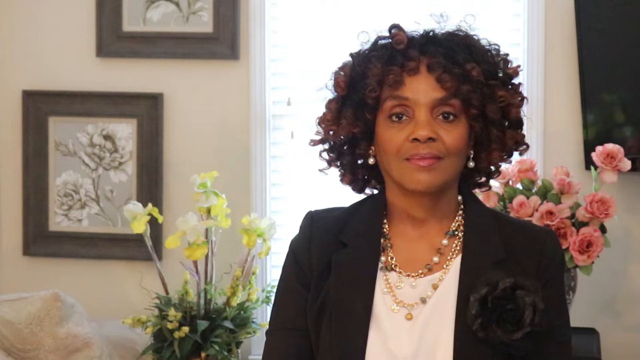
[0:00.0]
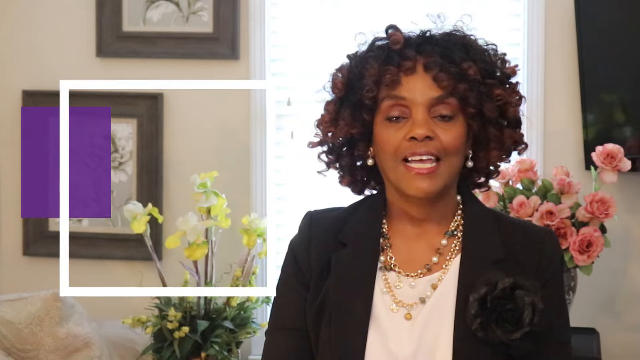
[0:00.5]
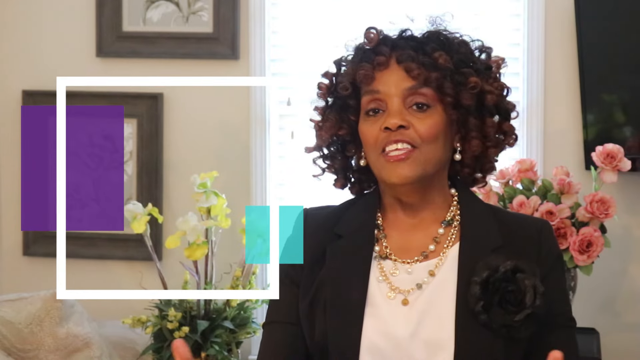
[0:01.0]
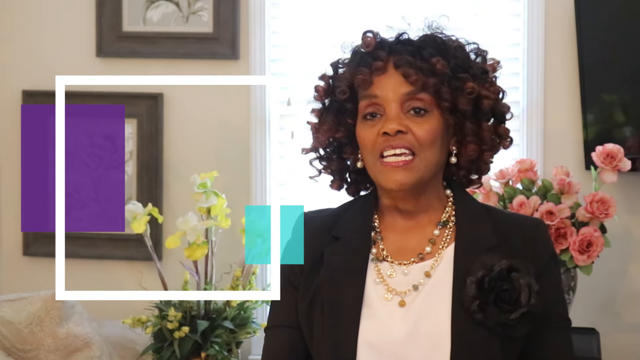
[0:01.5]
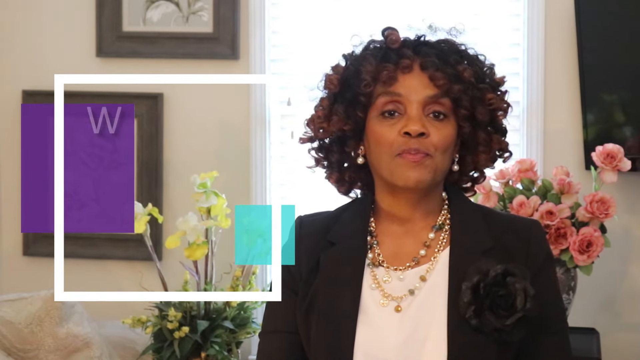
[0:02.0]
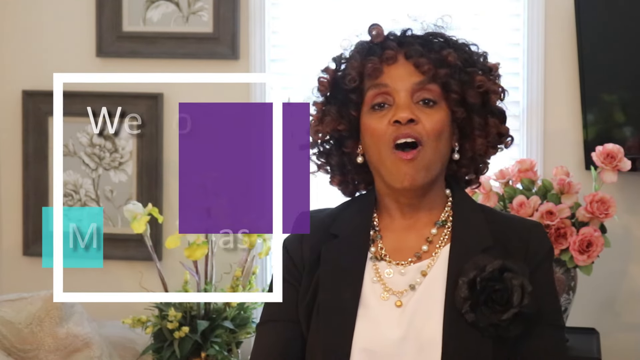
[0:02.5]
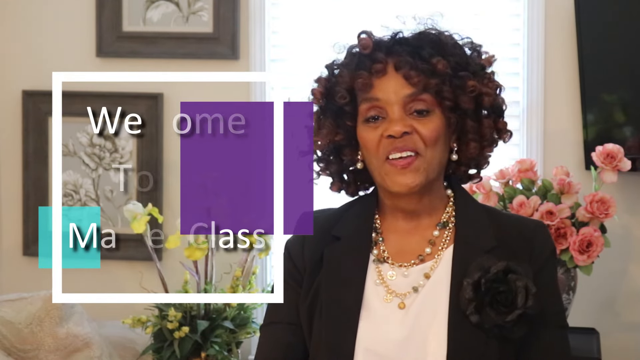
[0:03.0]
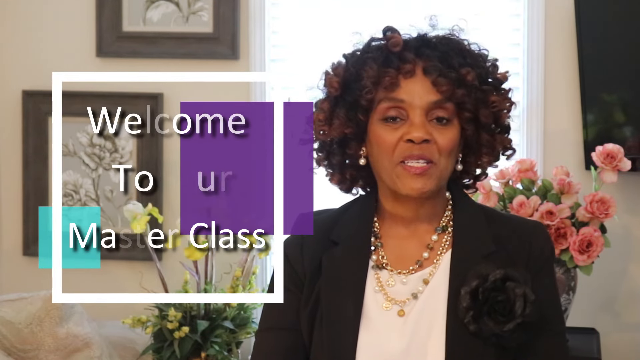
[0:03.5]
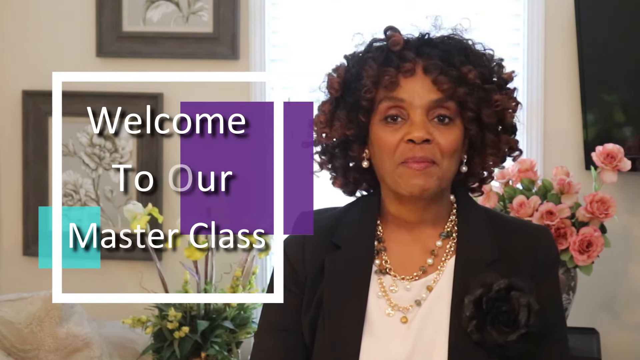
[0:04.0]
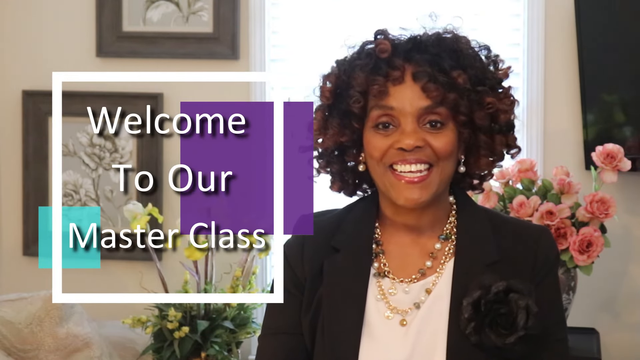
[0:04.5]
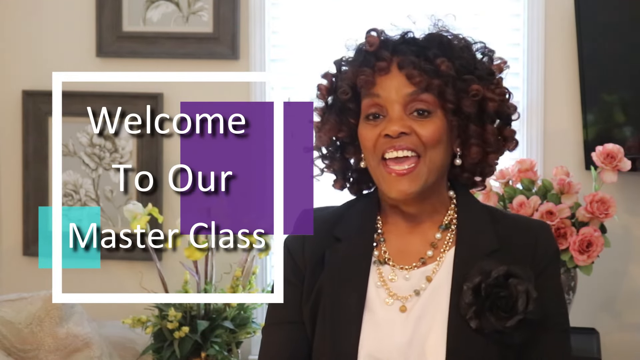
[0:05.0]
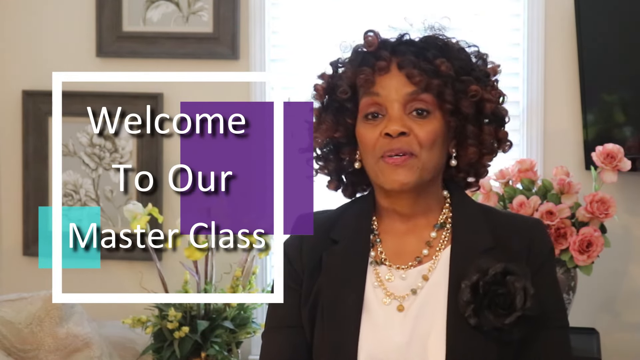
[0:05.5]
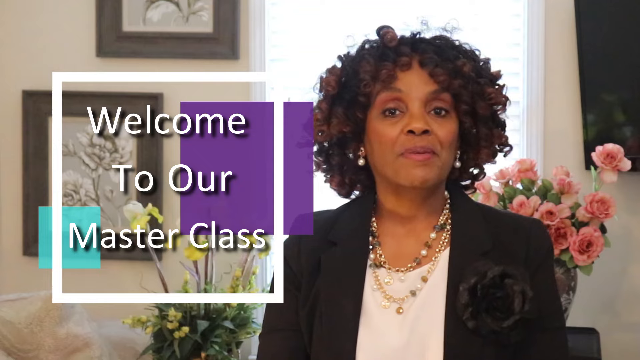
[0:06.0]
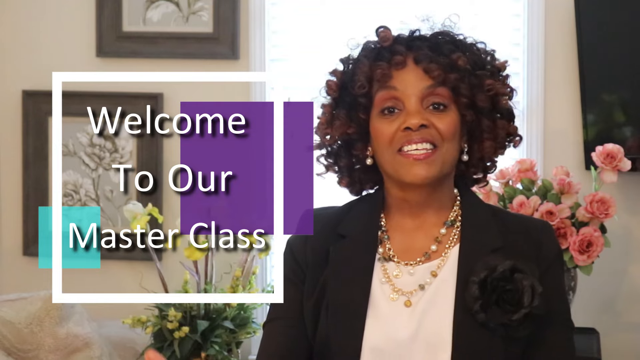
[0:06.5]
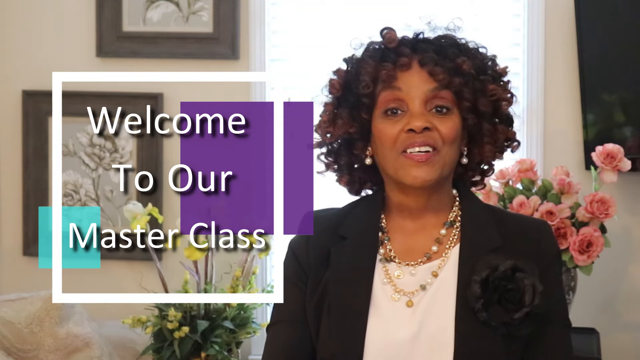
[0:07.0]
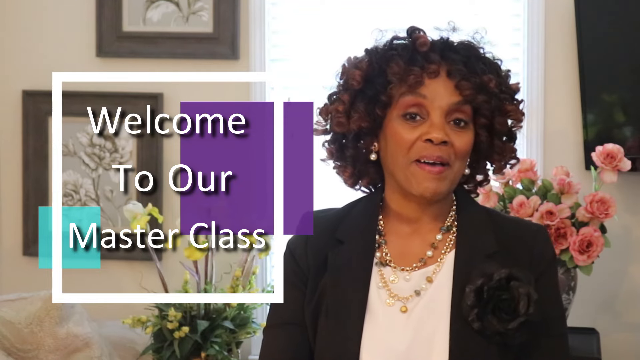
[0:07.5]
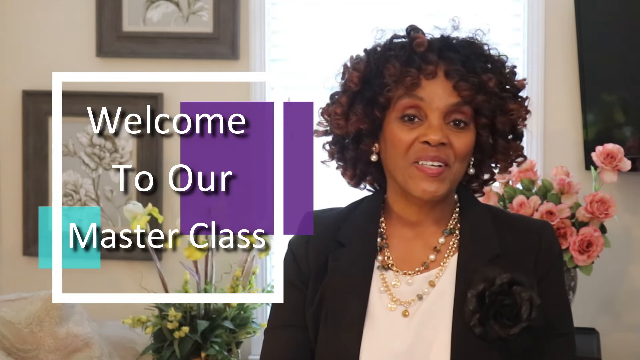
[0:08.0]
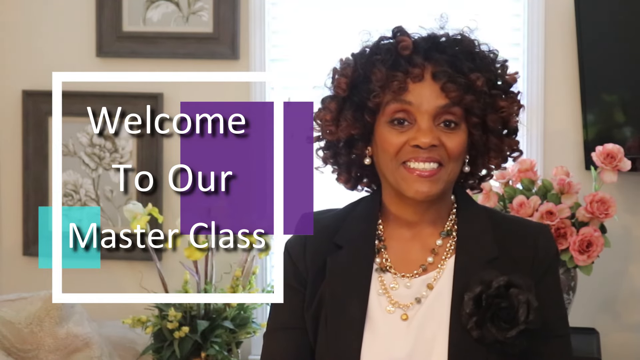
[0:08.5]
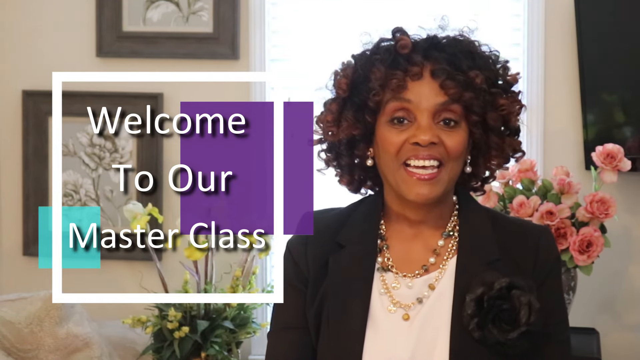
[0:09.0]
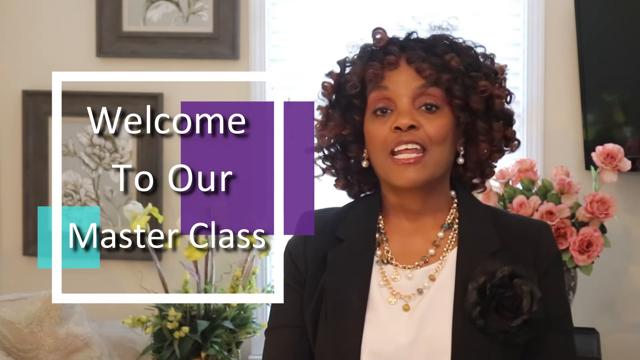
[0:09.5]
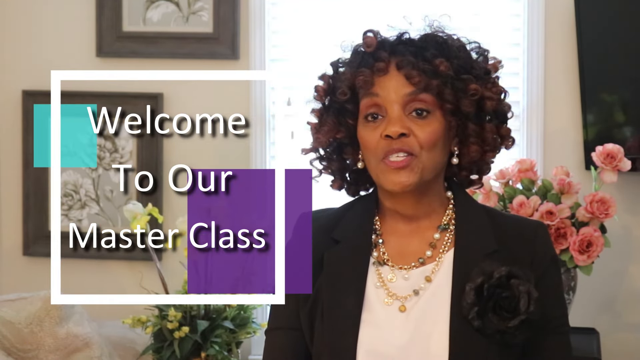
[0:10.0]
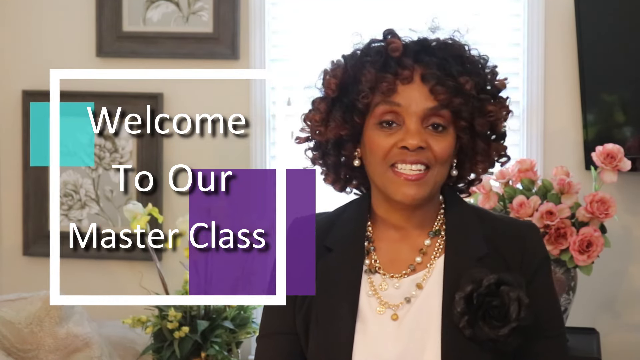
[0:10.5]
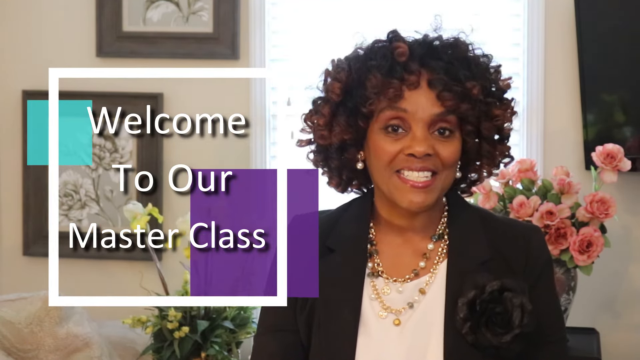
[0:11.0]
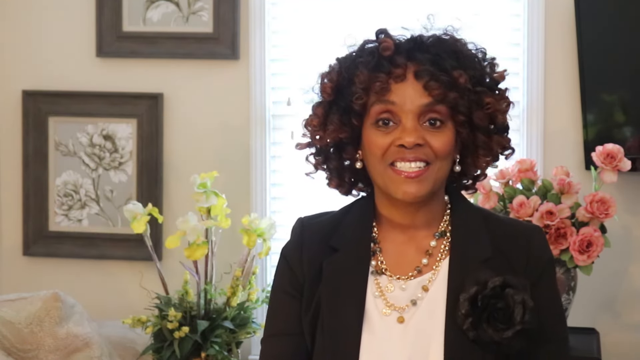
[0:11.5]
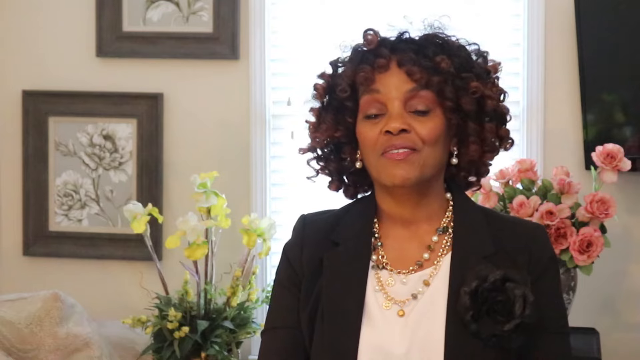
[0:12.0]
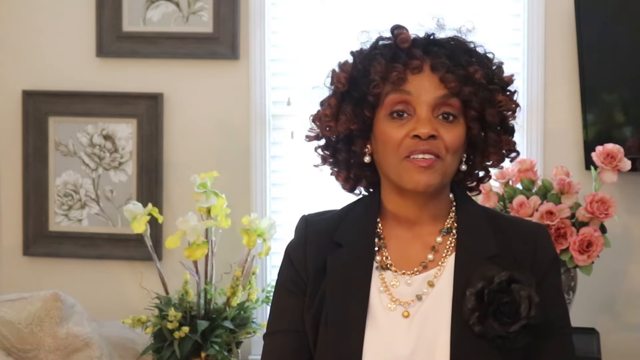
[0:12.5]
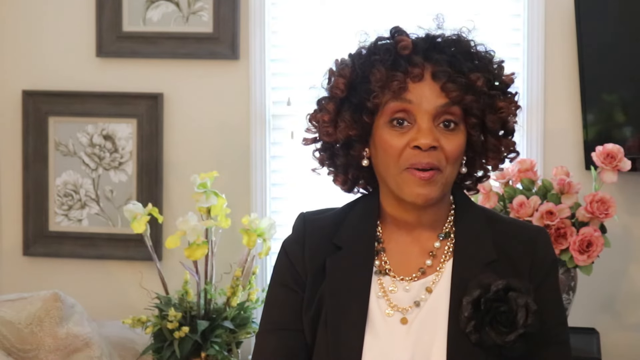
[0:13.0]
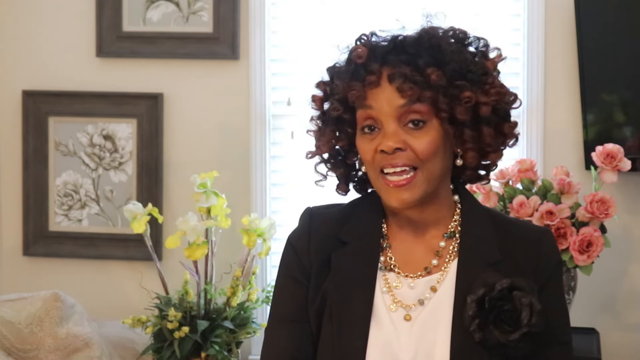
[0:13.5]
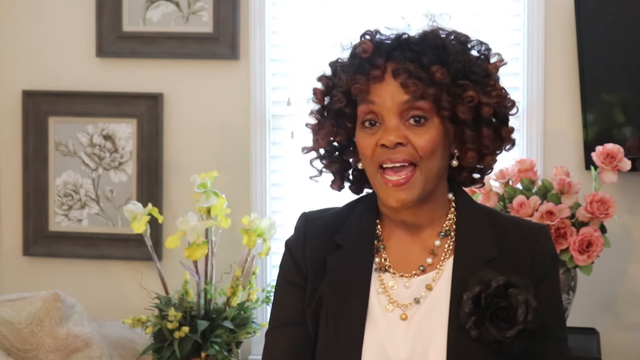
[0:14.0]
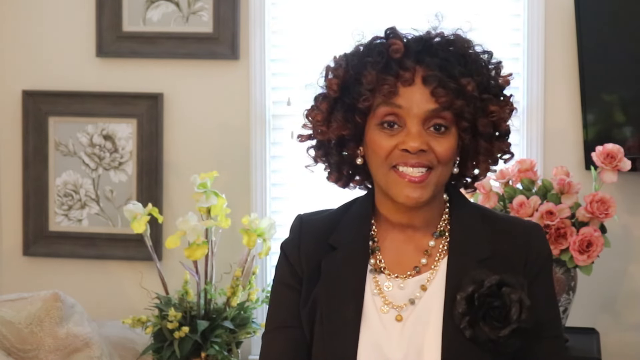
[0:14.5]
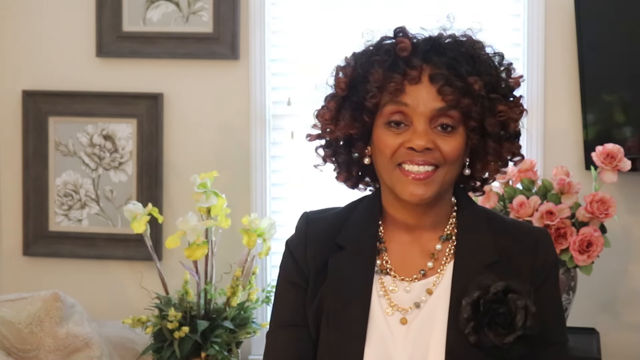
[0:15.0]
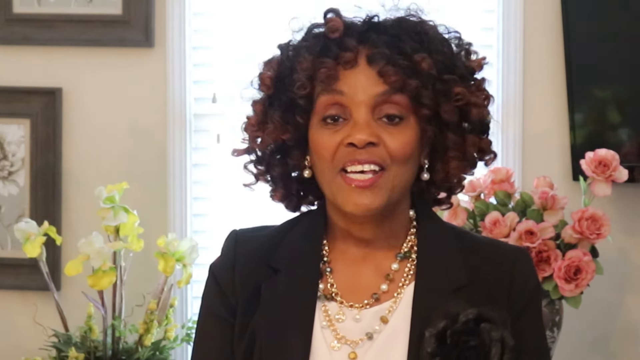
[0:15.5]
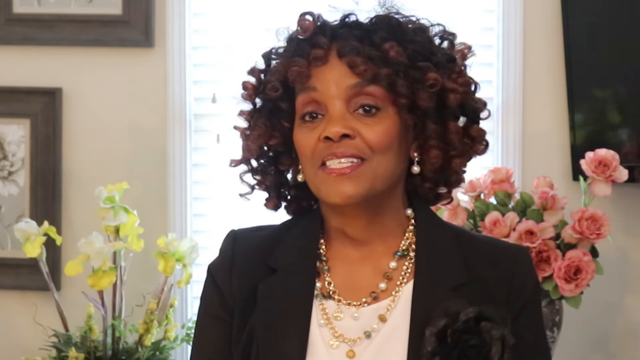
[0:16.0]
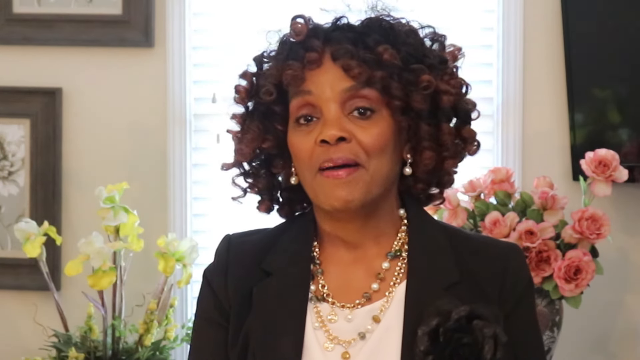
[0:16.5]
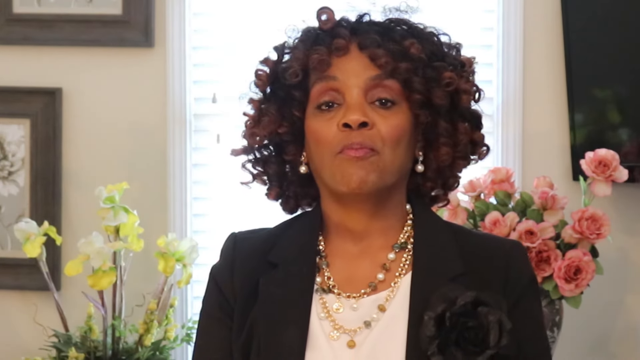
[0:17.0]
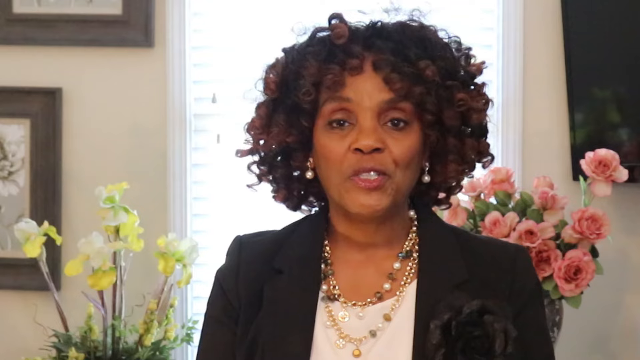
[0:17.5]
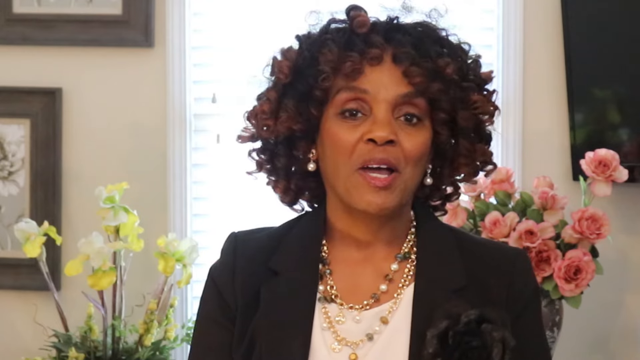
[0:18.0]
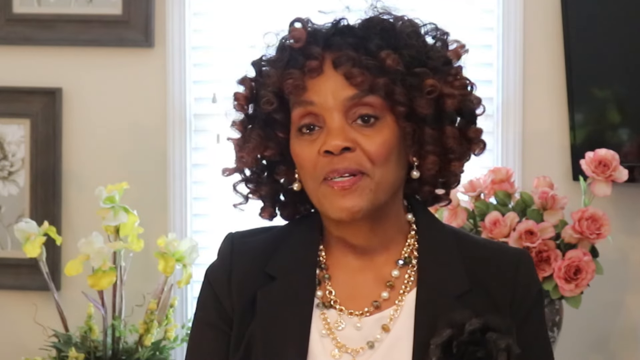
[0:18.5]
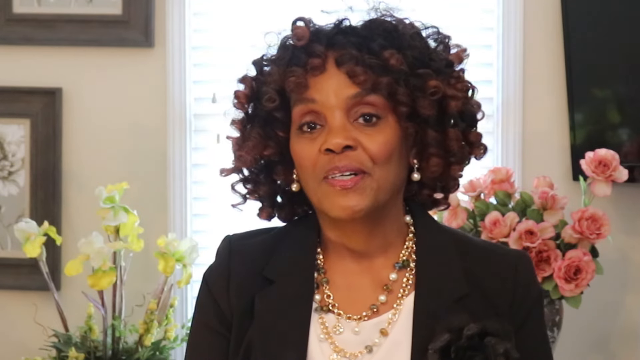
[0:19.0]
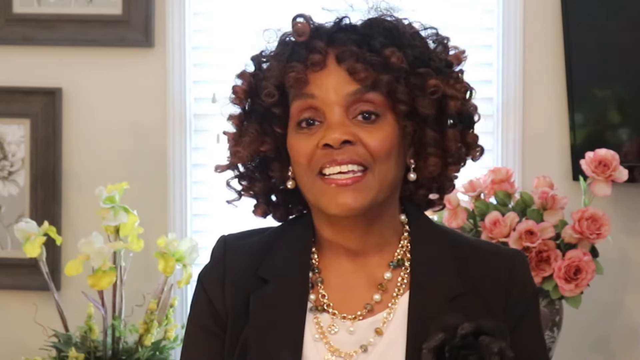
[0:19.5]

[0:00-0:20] A woman is talking. She is a Black woman with curly hair, wearing a black blazer with a black flower on its pocket, a white shirt, jewelry around her neck, earrings and makeup. She has white teeth and smiles a lot, appearing to bring positive energy and seeming to enjoy what she is talking about. She is dressed nicely and professionally. Behind her are pink flowers, another flower, a TV on the wall and some picture frames. It is daylight, with light coming from outside the blinds. Text on screen says "welcome to our master class," so she is apparently about to teach some type of master class.